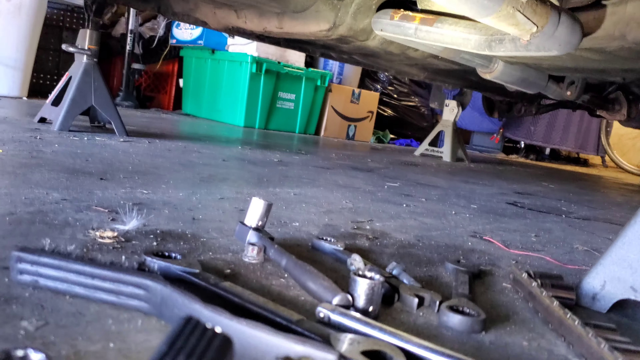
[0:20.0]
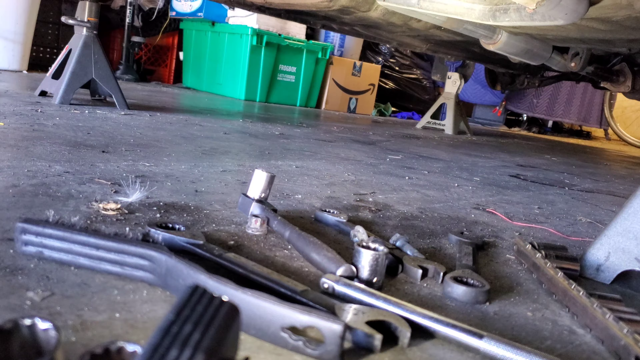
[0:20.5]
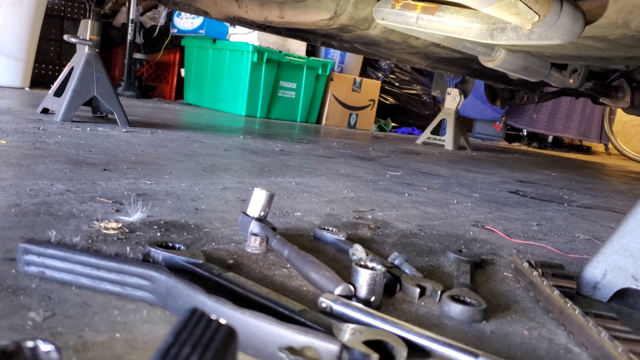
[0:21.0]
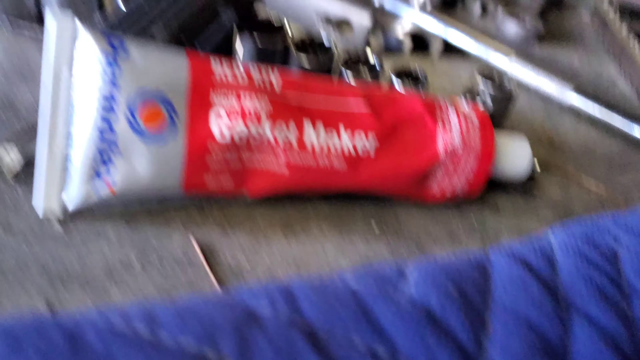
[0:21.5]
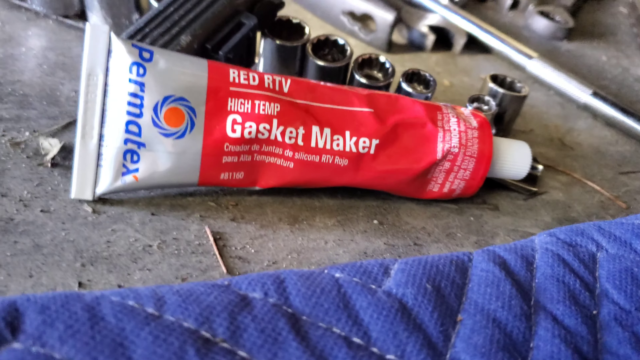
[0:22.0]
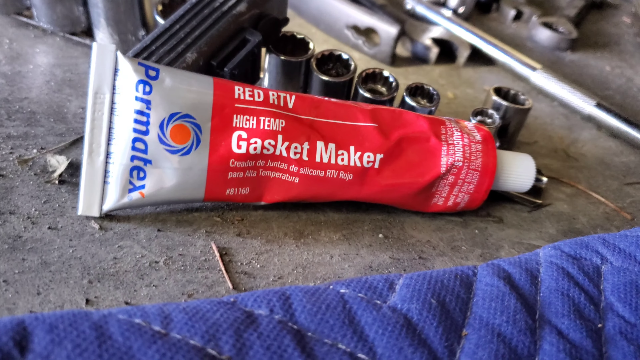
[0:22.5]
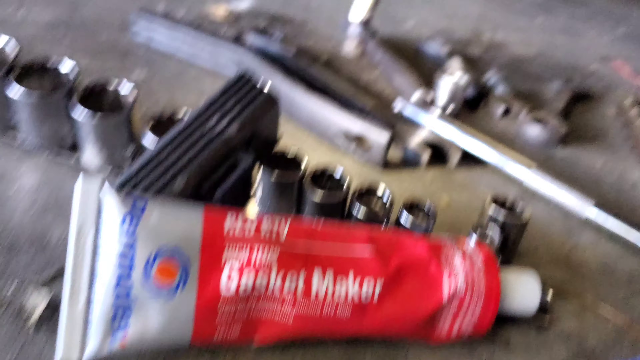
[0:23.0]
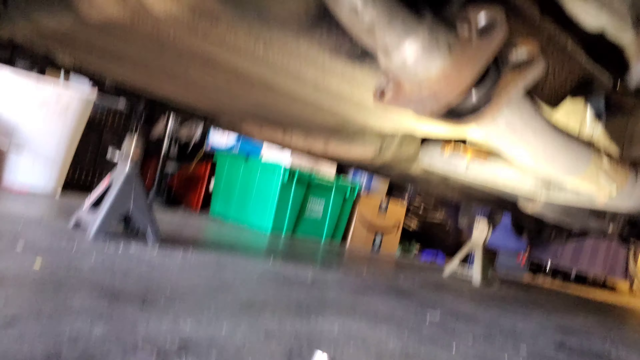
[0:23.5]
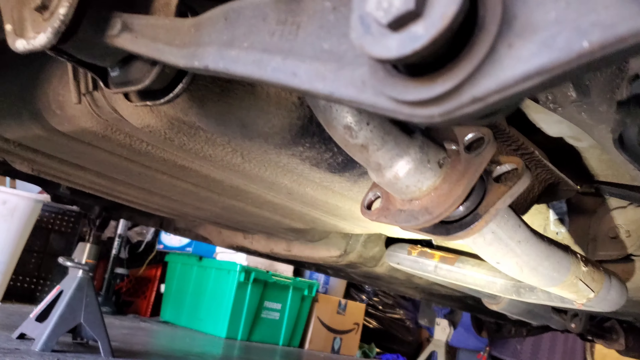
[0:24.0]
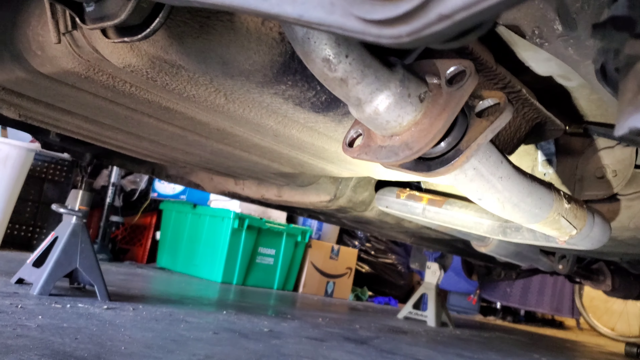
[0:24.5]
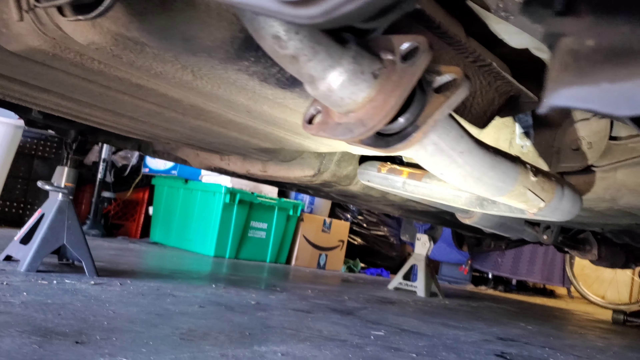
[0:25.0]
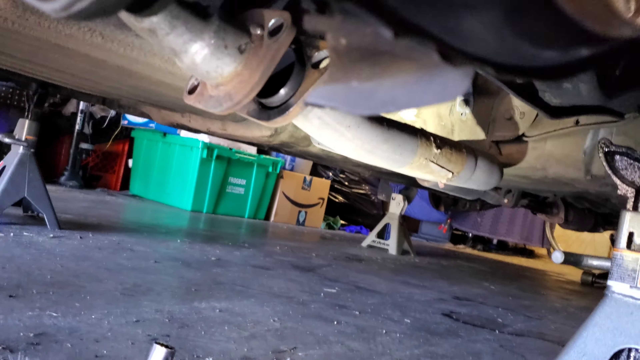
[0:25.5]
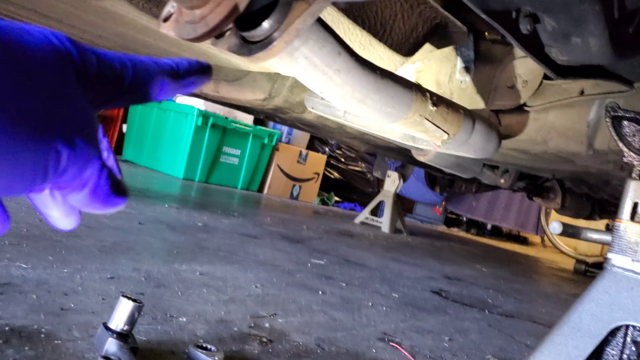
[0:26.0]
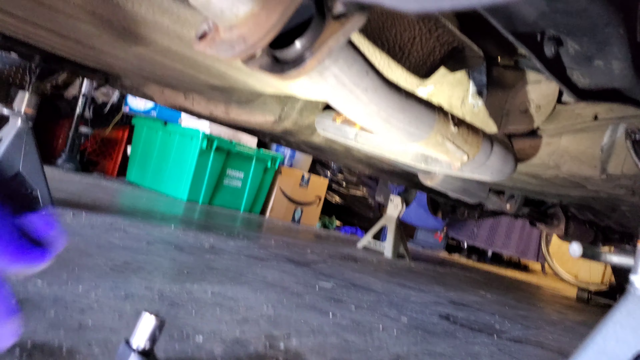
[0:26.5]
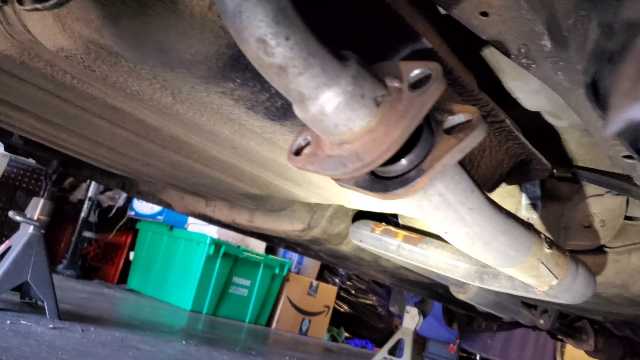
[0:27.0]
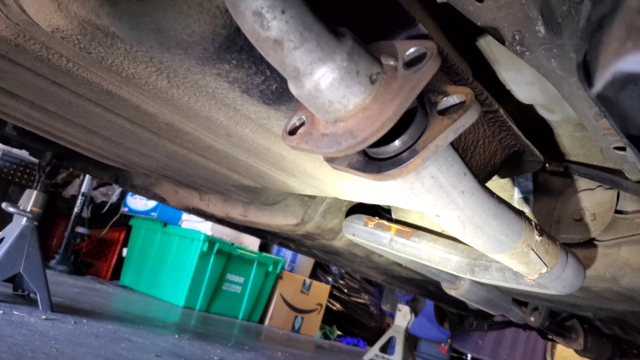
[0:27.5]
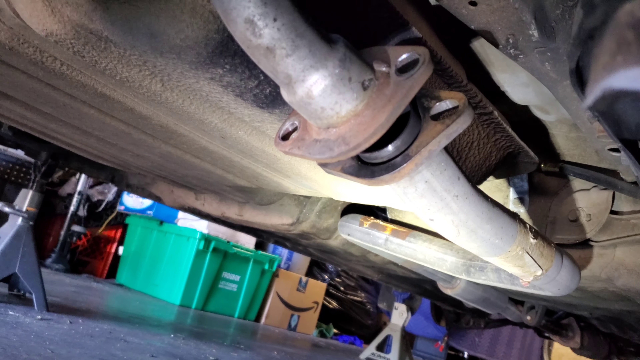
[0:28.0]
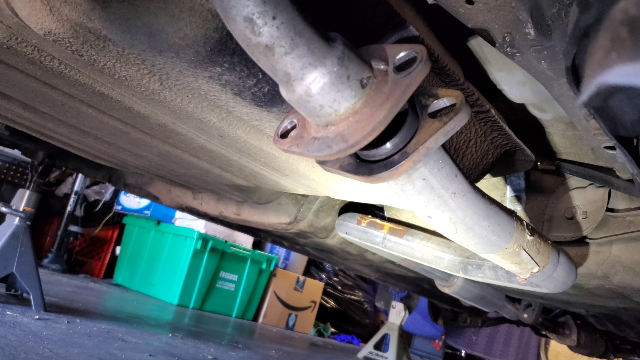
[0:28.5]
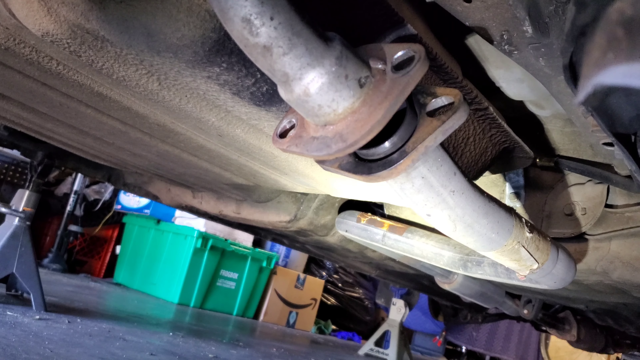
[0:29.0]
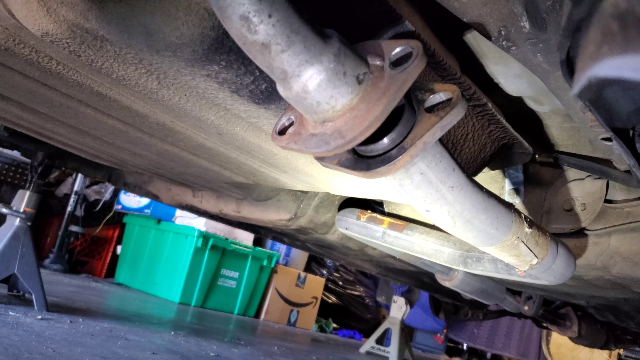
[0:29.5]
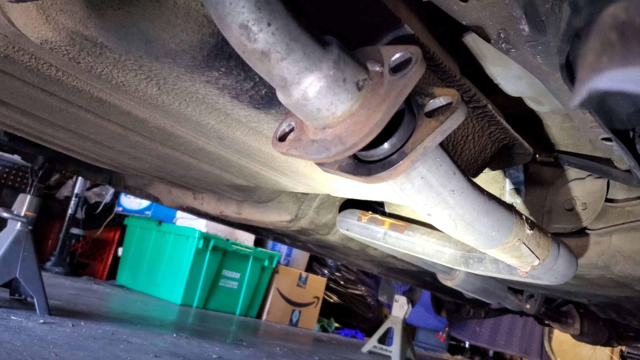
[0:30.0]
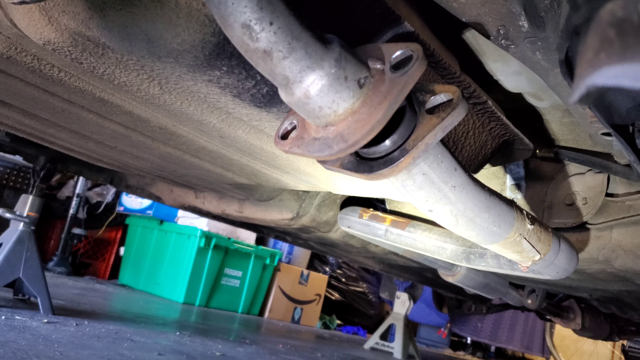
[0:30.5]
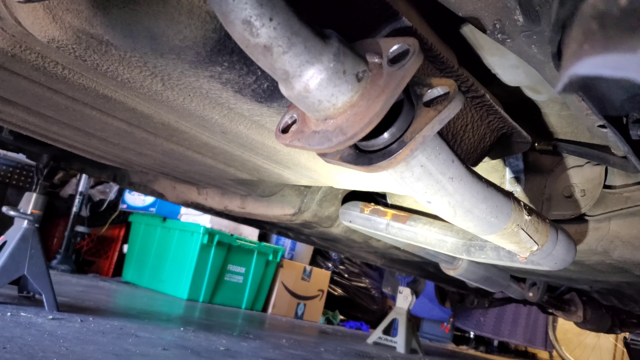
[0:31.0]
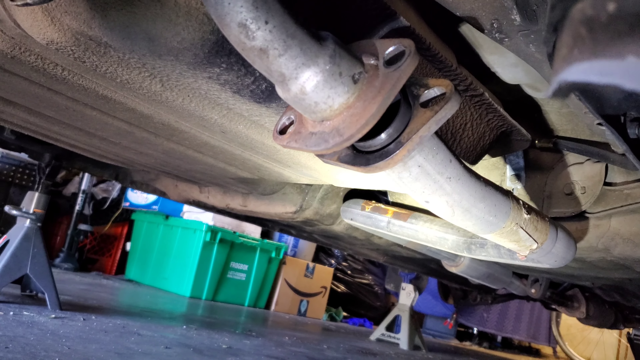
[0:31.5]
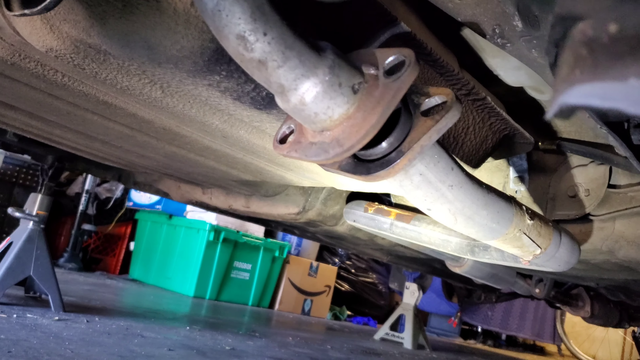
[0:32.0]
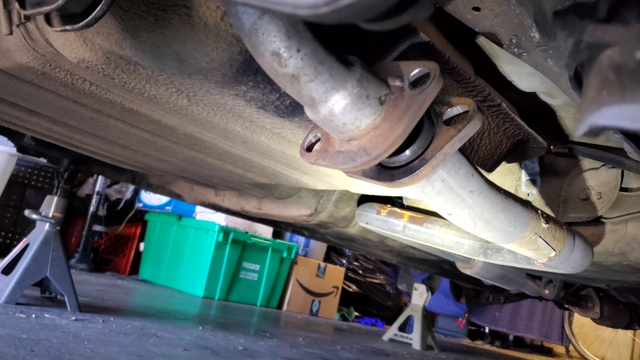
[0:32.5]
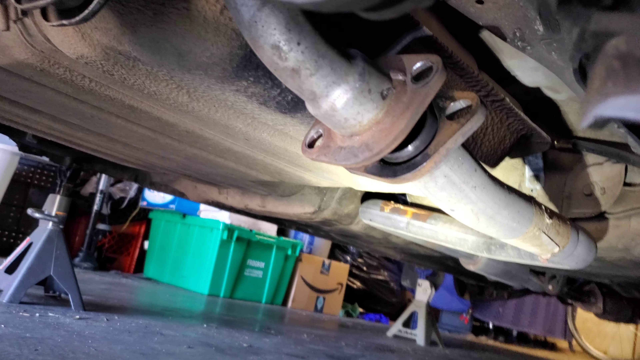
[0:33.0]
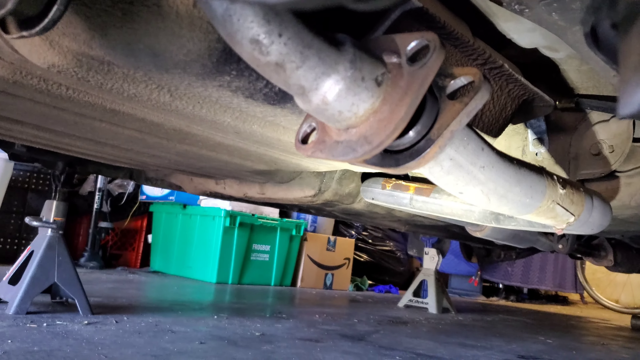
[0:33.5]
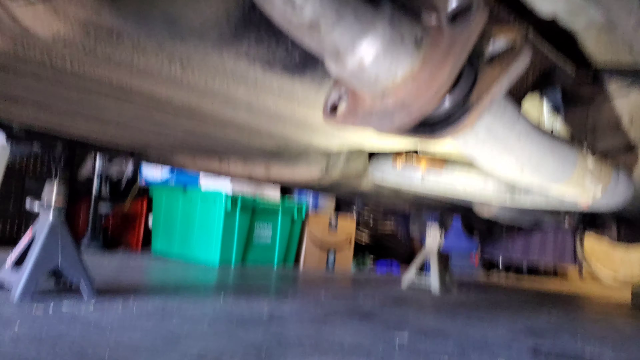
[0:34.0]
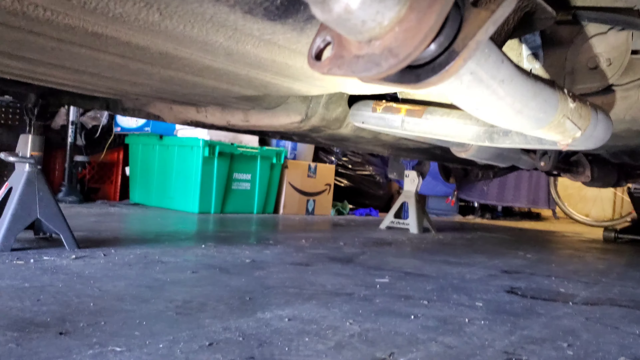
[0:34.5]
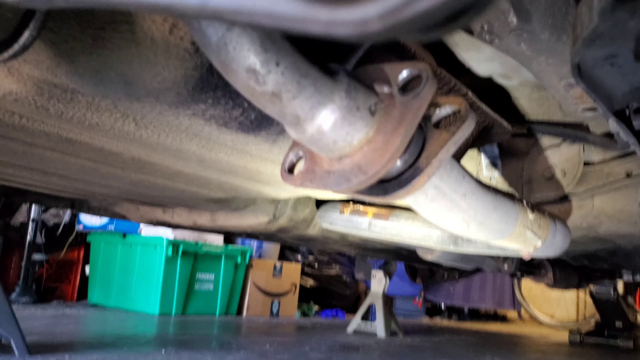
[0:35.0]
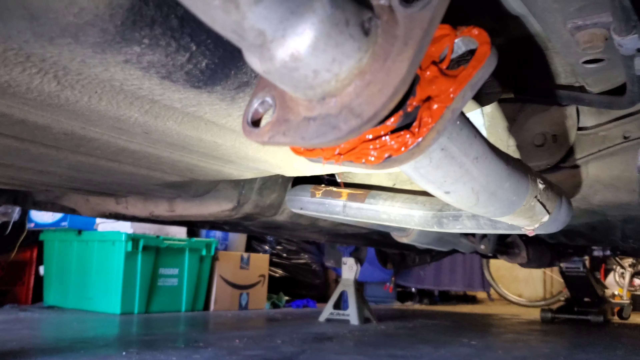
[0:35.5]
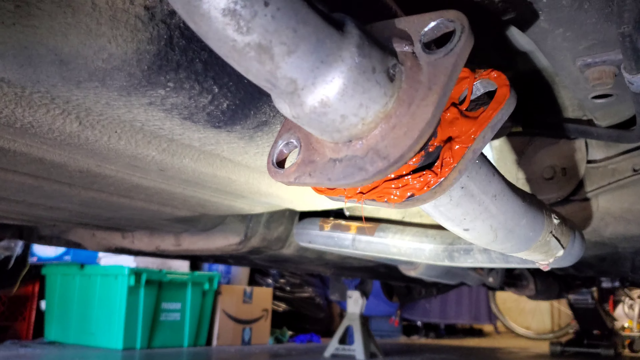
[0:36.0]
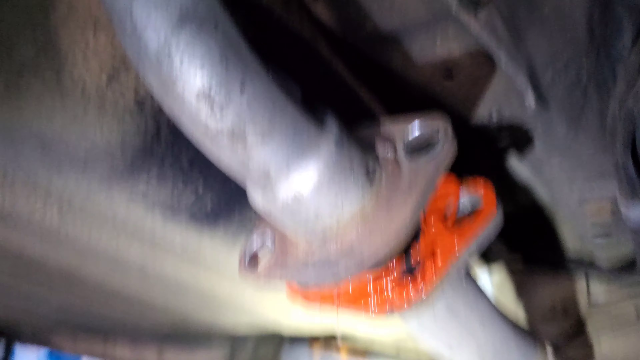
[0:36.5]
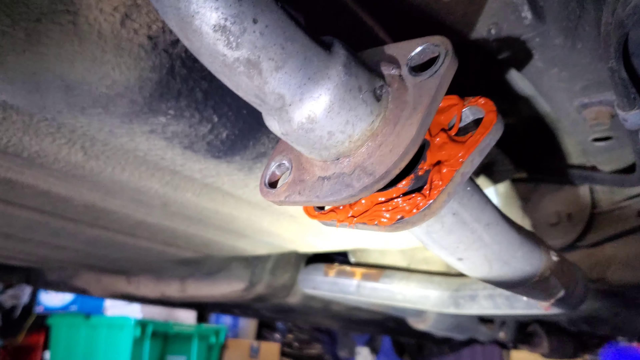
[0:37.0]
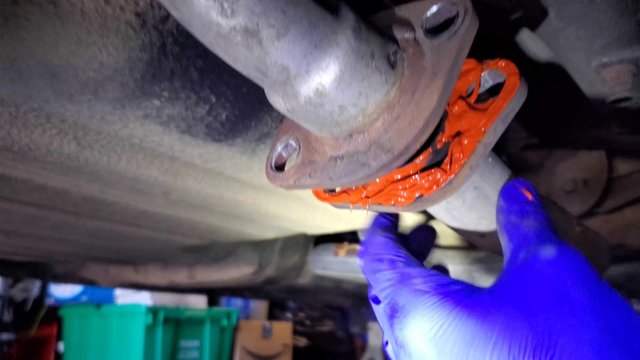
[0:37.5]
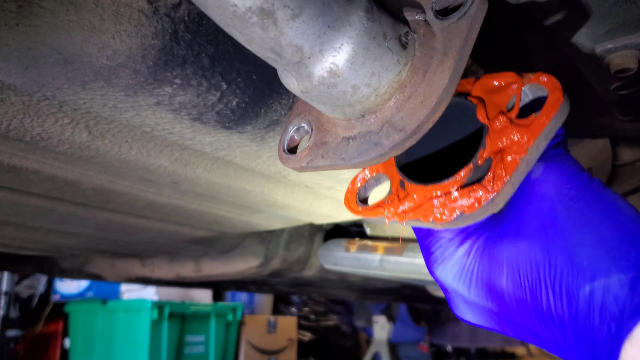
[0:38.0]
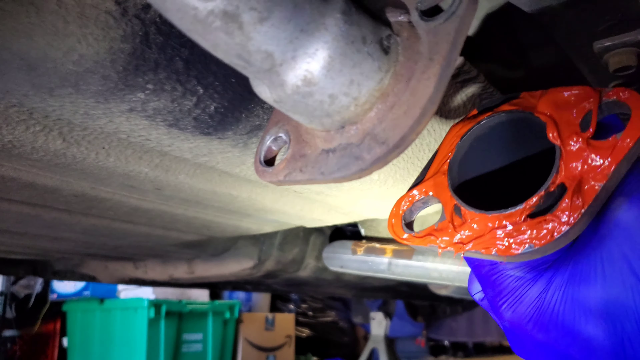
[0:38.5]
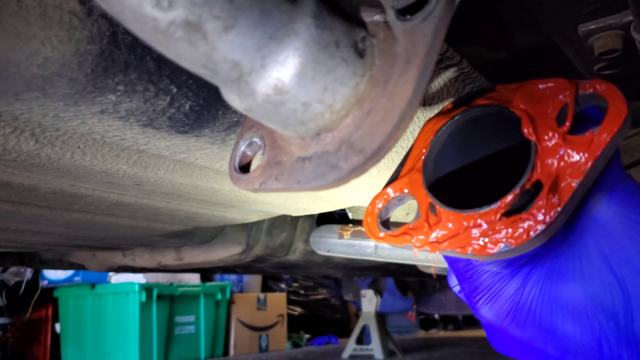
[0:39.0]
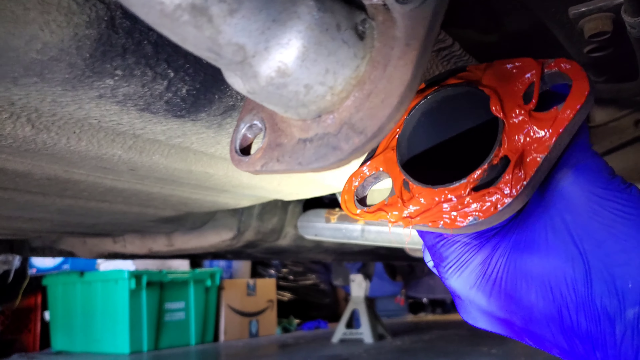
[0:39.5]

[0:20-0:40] The underside of a vehicle of some kind is shown in a garage with a dirty metal floor. Four triangular-shaped jacks hold the vehicle about half a foot off the floor, and there are sockets and wrenches on the floor. A tube of gasket maker has the words "RED RTV" and "HIGH TEMP" written on it, a white screw top, and the word "Permatex" in blue writing. The view then switches to the underside of the vehicle, where a long, exhaust-type looking silver tube has a black rim circle in the middle of it. Someone points at this piece of the car with a hand wearing a blue glove. The joint between this tube and the tube next to it is now covered in a gooey orange liquid, and the person's hand is now holding the left-hand side of the metal tube.